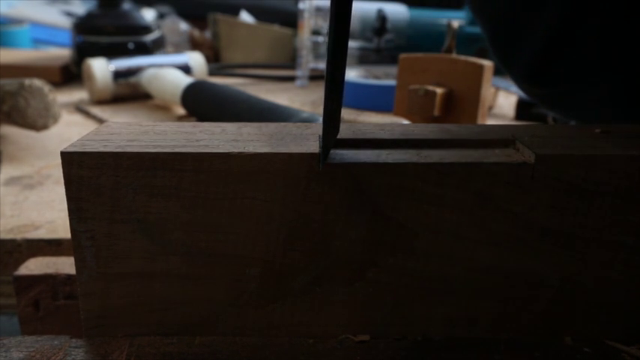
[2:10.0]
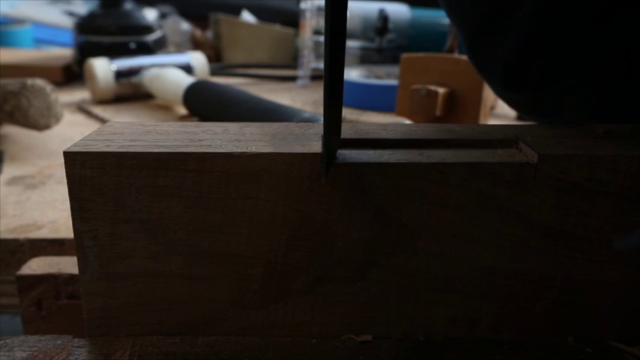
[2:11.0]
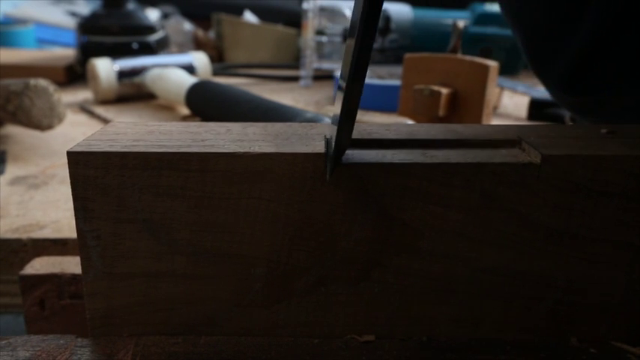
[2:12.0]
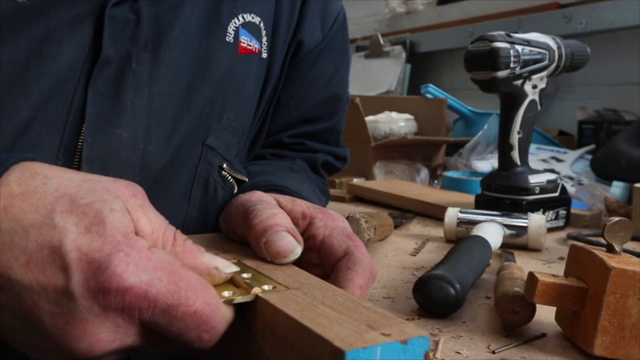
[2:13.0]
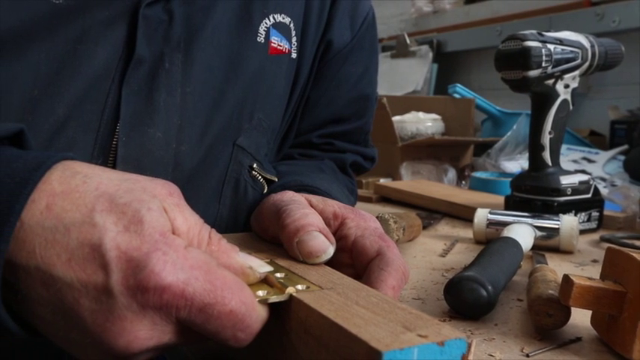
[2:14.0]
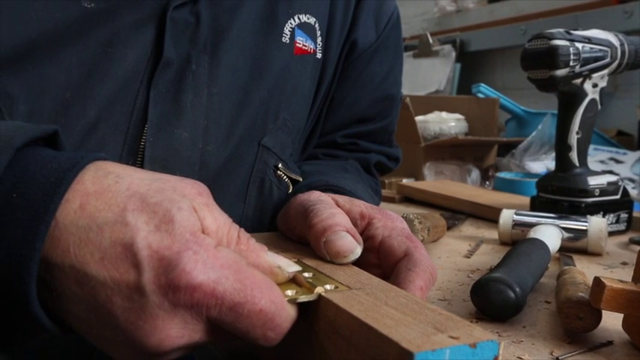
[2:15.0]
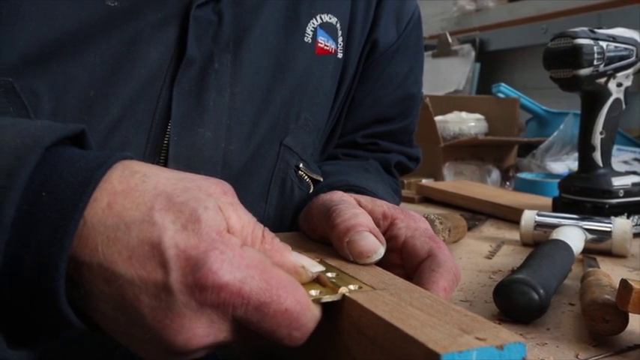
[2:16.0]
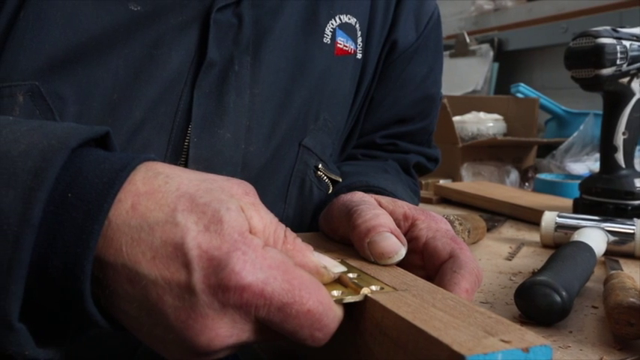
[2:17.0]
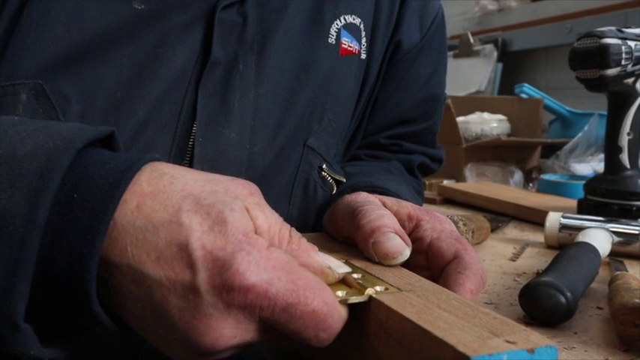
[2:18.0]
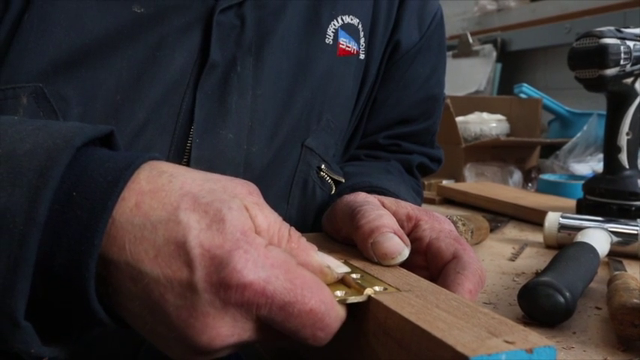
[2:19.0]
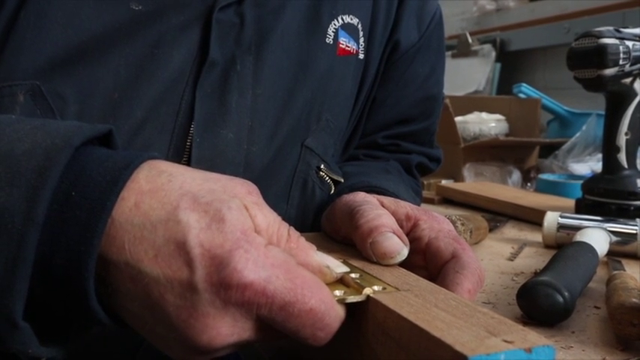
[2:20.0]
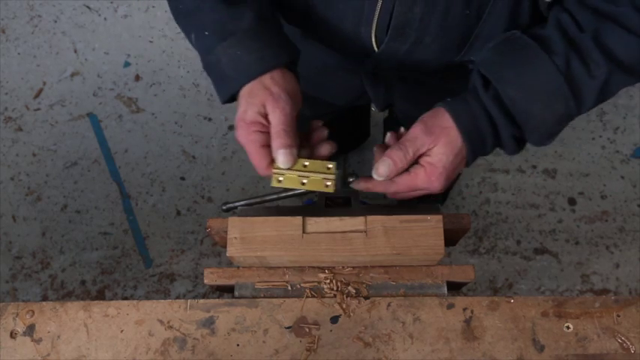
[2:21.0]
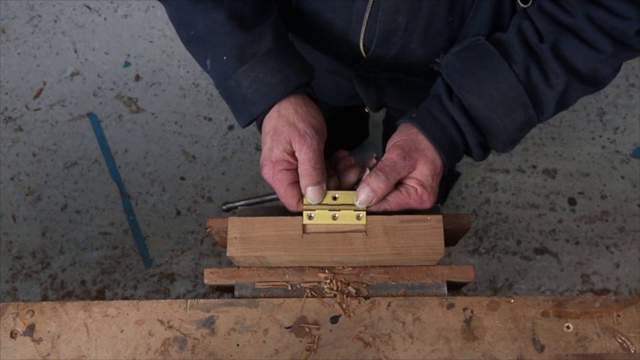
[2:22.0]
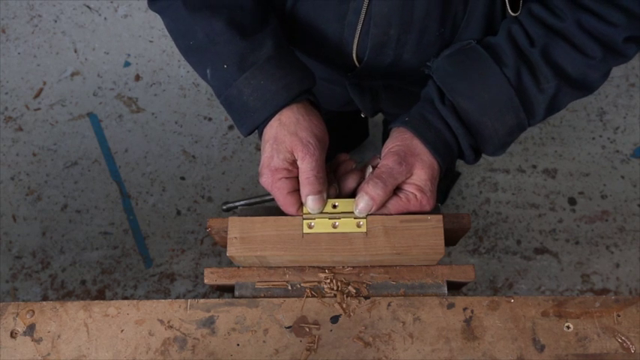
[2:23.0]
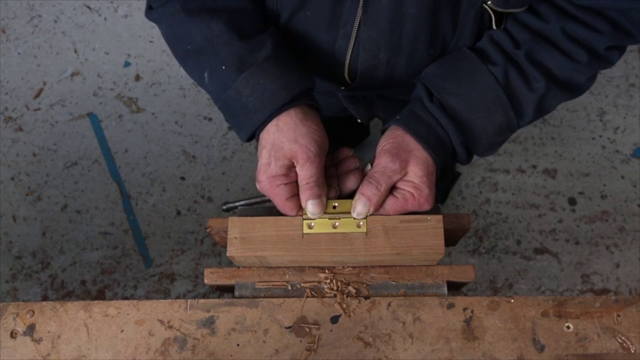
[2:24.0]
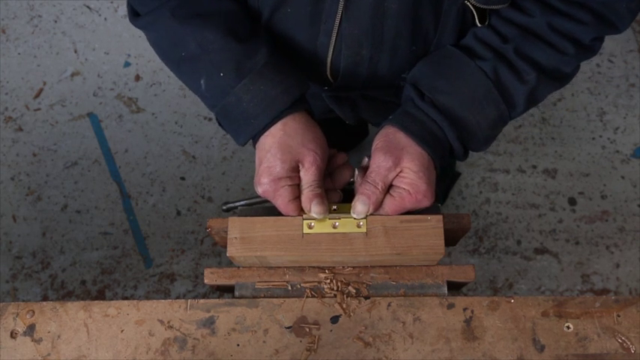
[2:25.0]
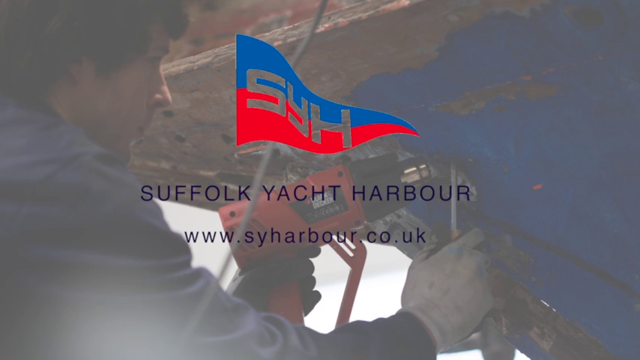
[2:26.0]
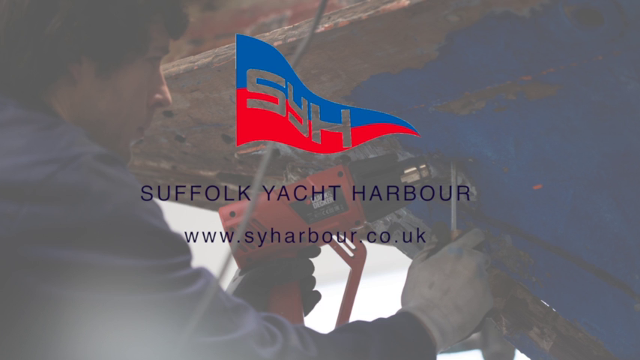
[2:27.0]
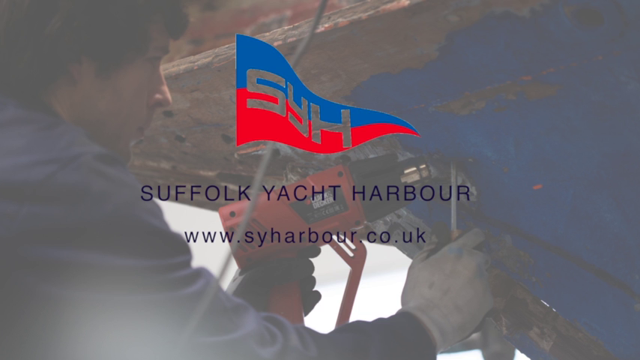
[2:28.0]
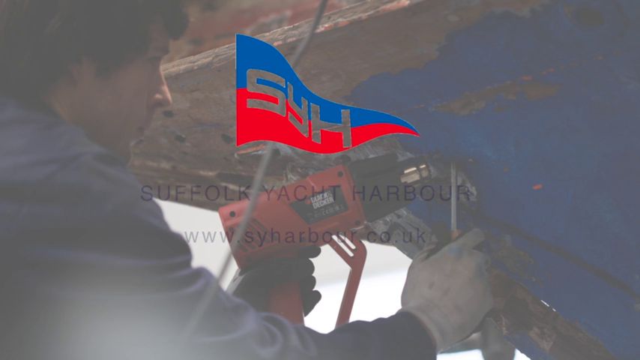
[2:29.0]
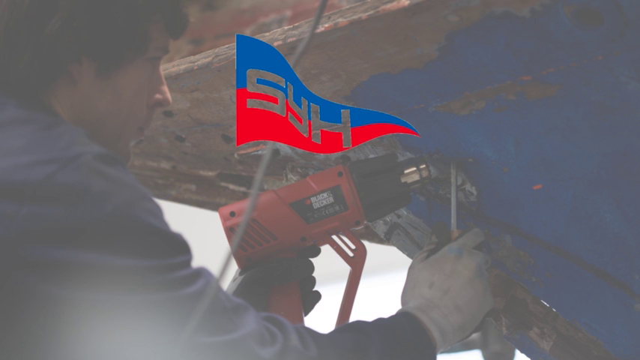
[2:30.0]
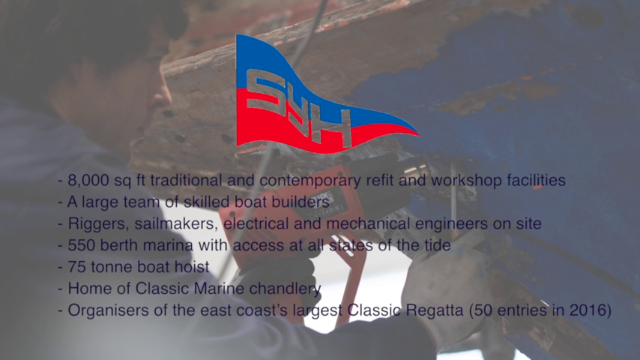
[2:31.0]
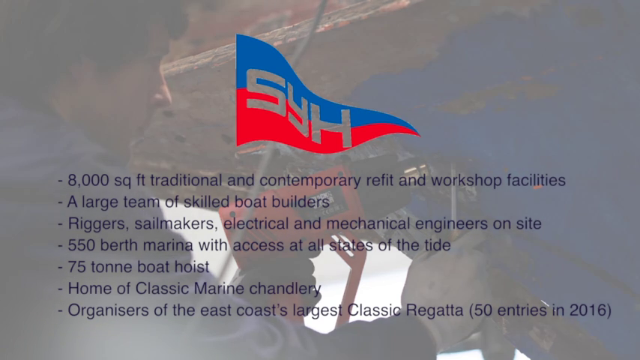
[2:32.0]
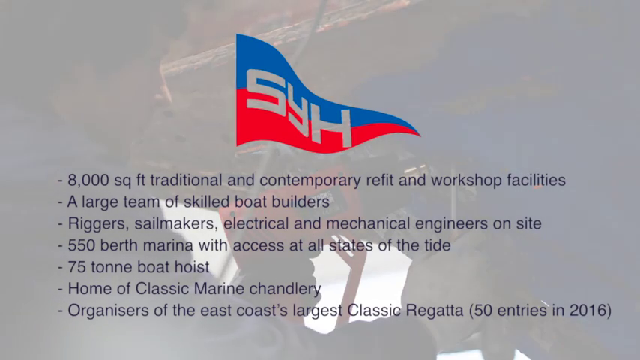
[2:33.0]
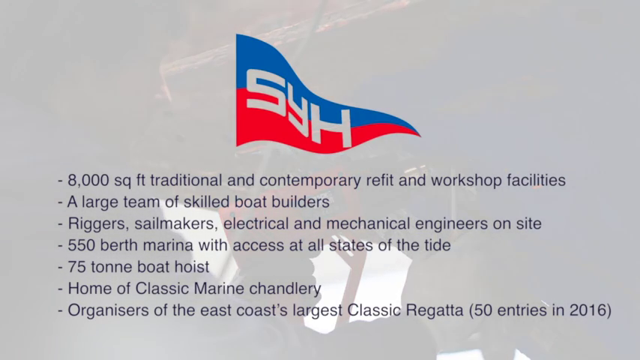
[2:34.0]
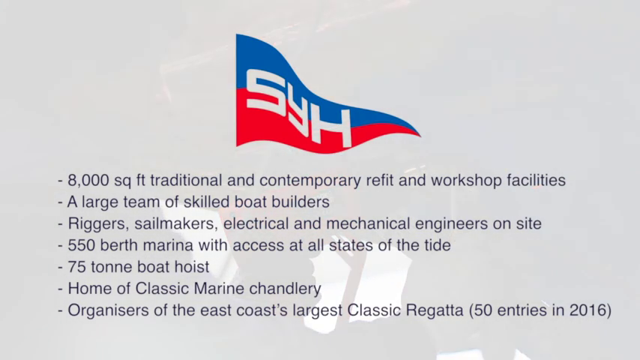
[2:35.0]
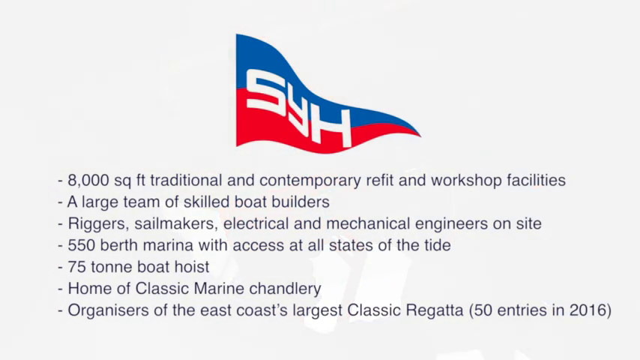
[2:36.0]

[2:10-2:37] The scene is shown from a dark angle, probably due to poor lighting. In an overhead view the person is still working, scraping a little, apparently to get wood chips out of the corners. He holds the object and guides the hinge in with his right hand, and it looks like it fits perfectly within the area he made. To the right is a black and white power drill with its battery visible, and right next to the drill is a hammer with a long black handle. He wiggles the hinge a little, and an overhead view shows it fitting perfectly as he puts it in. The title then appears, along with information about the facilities across the screen.